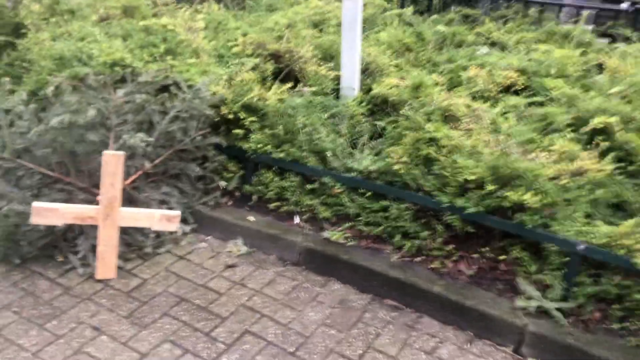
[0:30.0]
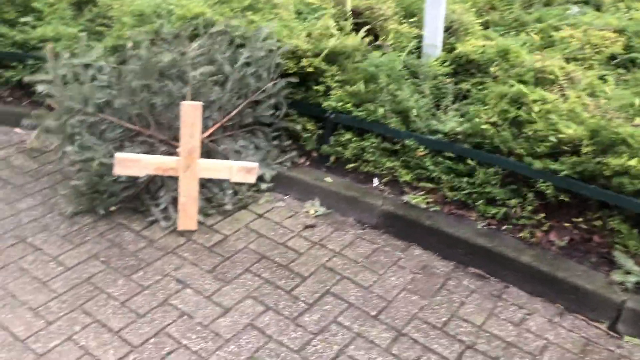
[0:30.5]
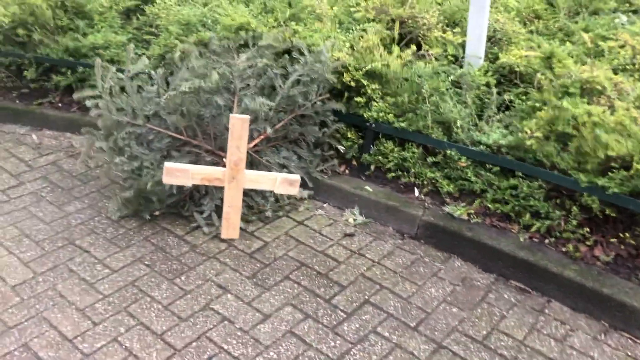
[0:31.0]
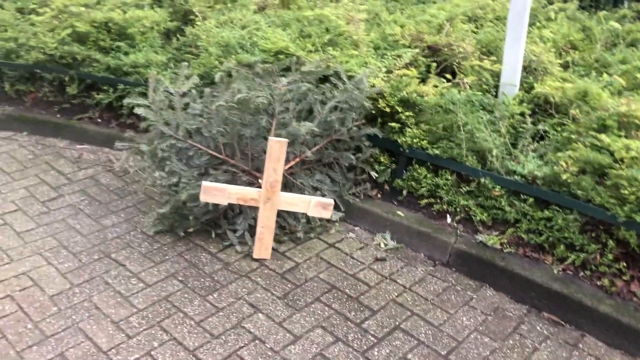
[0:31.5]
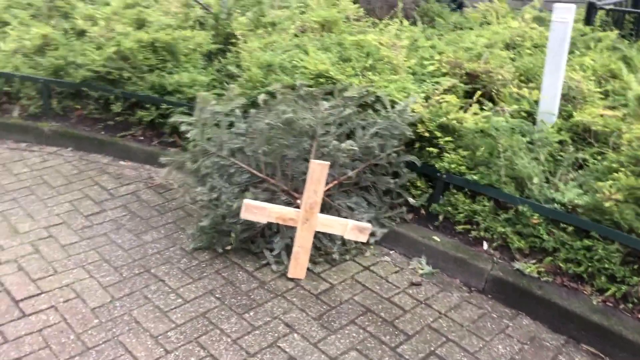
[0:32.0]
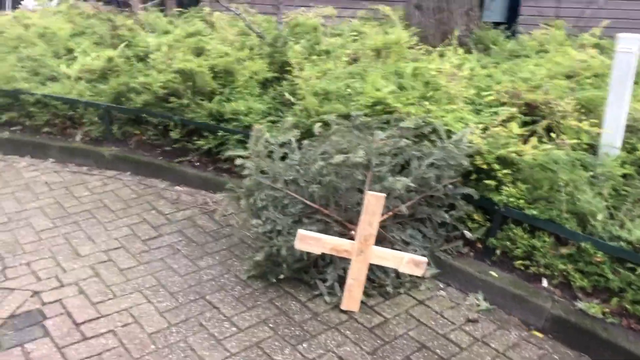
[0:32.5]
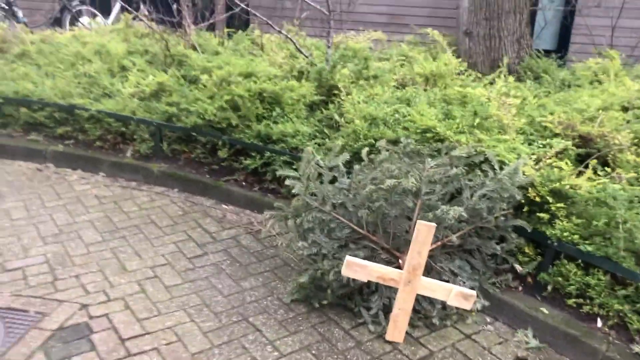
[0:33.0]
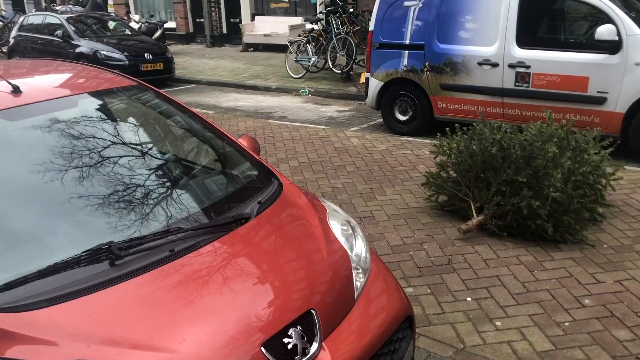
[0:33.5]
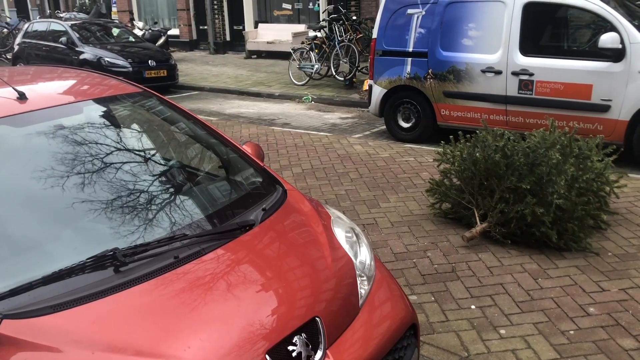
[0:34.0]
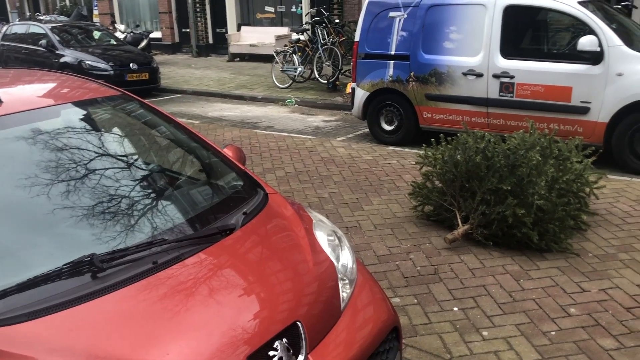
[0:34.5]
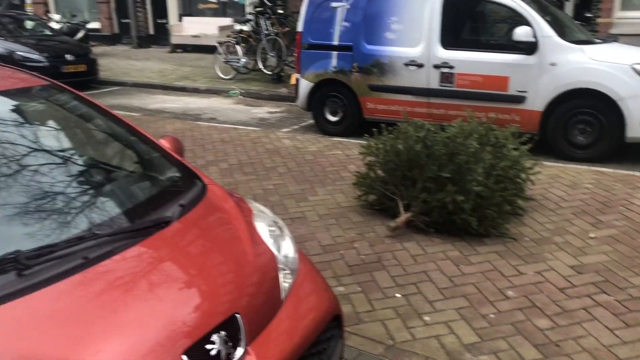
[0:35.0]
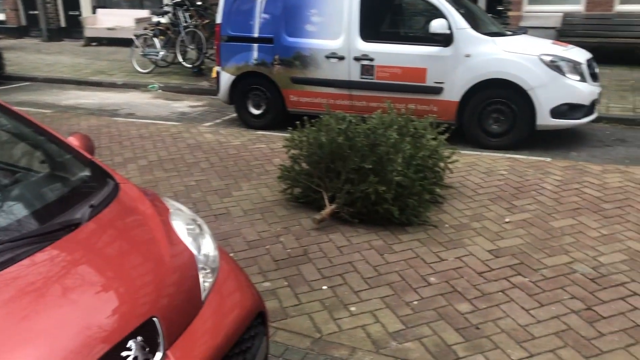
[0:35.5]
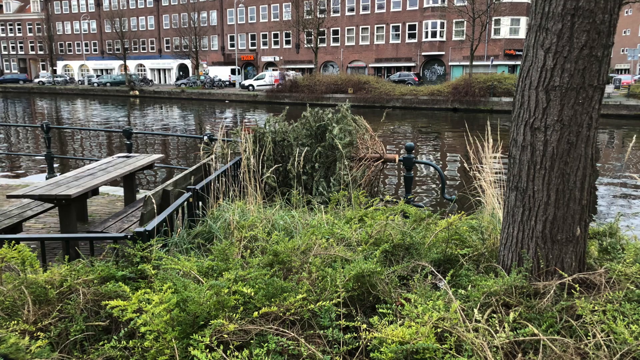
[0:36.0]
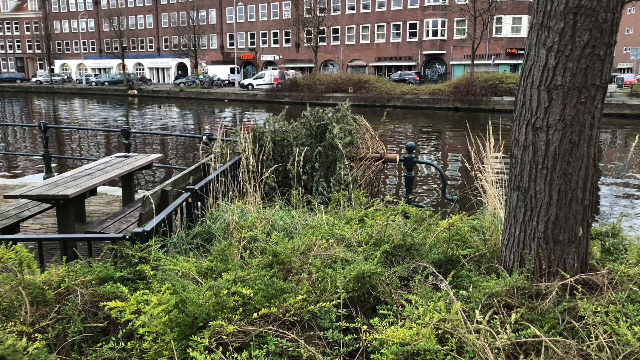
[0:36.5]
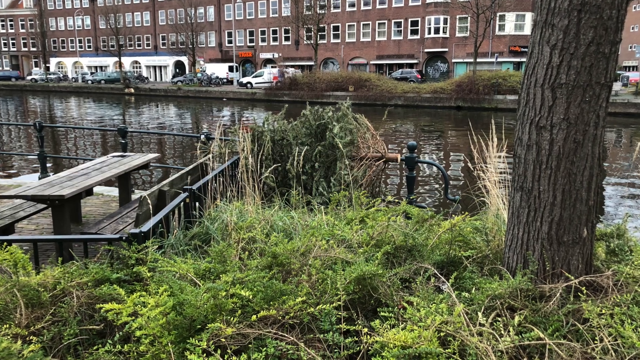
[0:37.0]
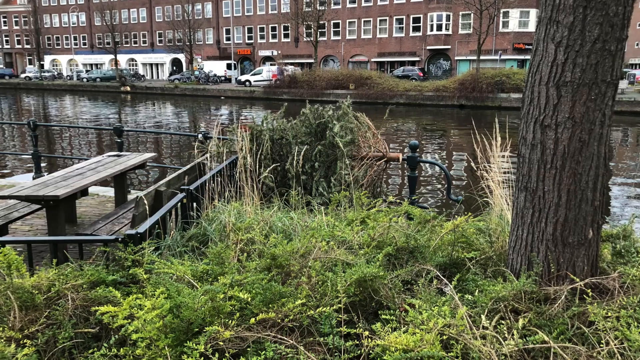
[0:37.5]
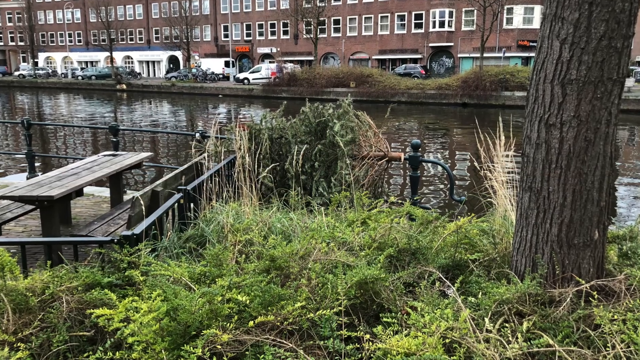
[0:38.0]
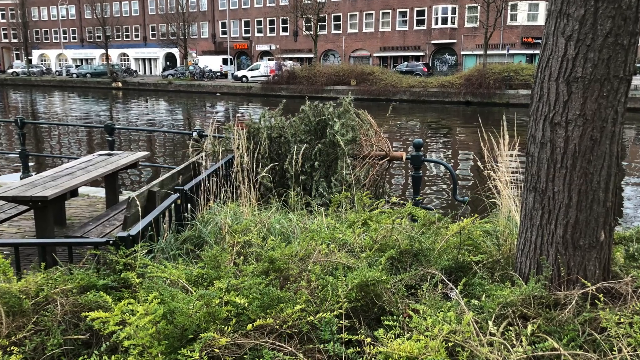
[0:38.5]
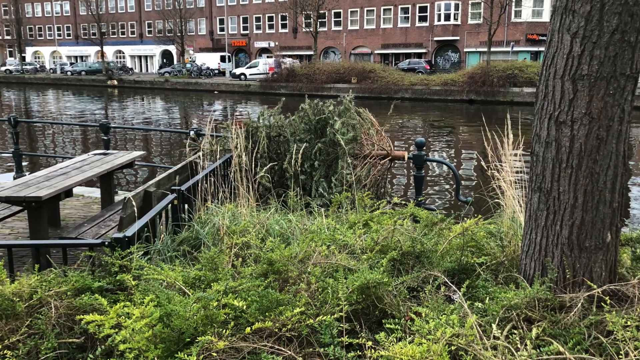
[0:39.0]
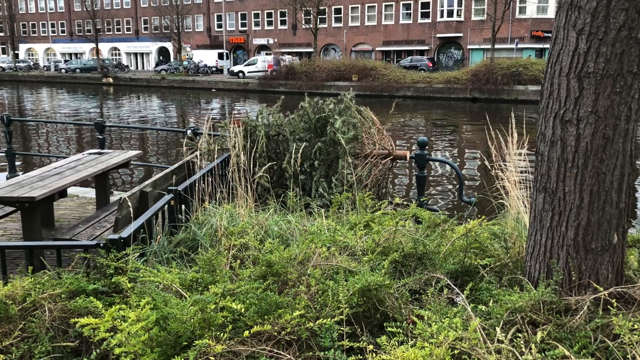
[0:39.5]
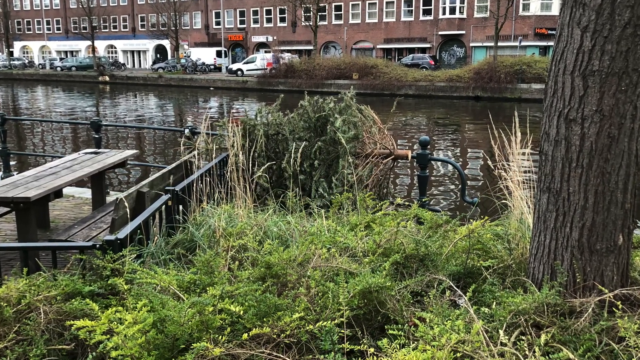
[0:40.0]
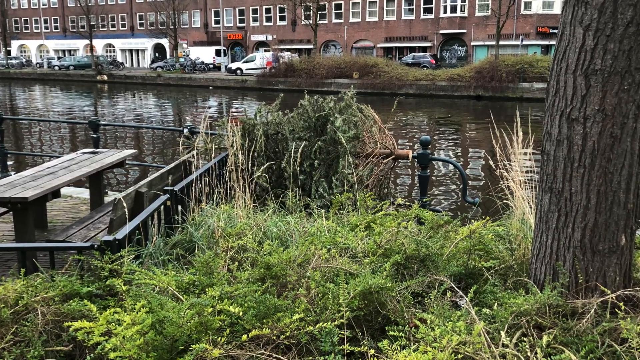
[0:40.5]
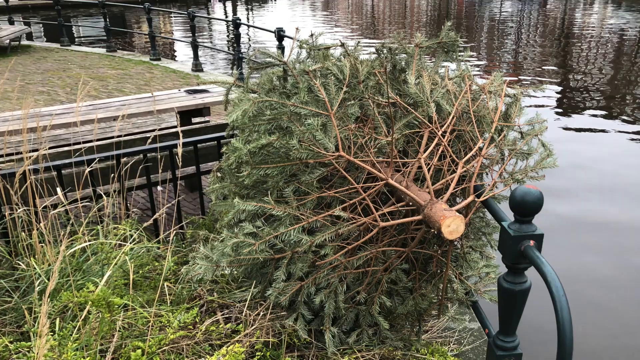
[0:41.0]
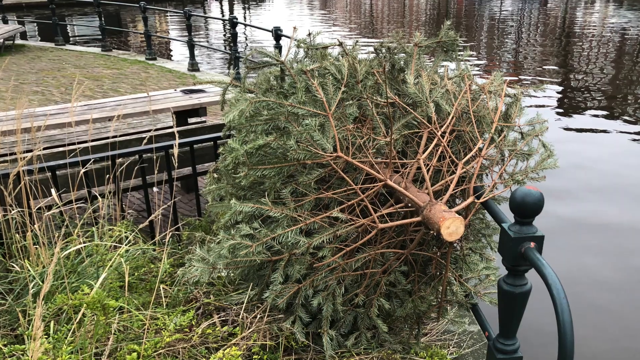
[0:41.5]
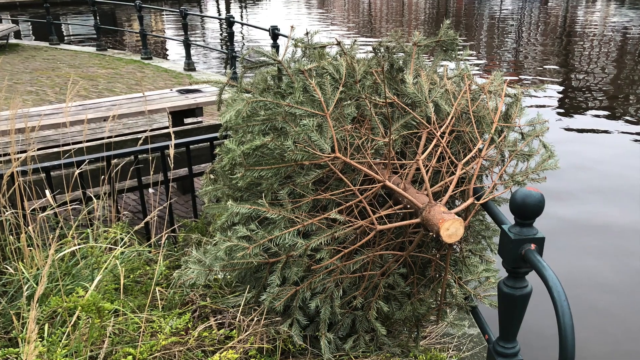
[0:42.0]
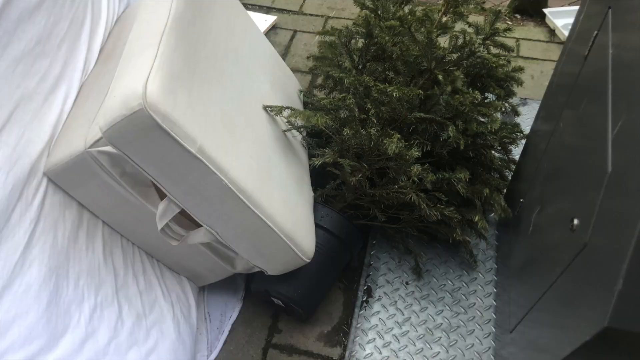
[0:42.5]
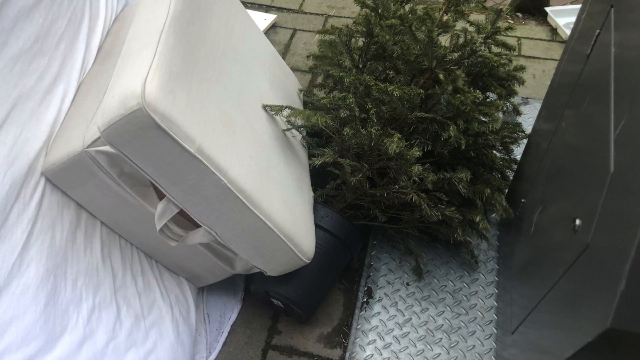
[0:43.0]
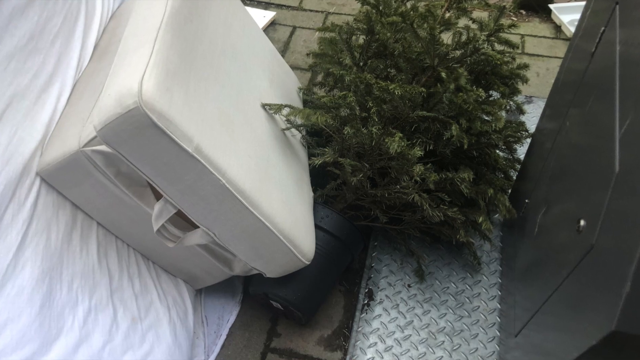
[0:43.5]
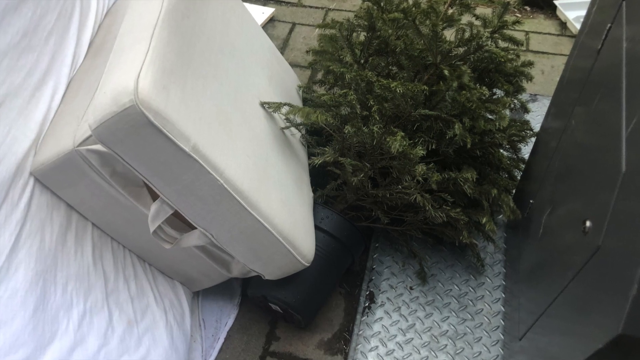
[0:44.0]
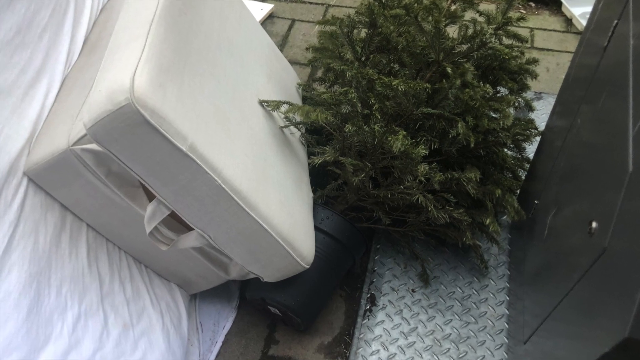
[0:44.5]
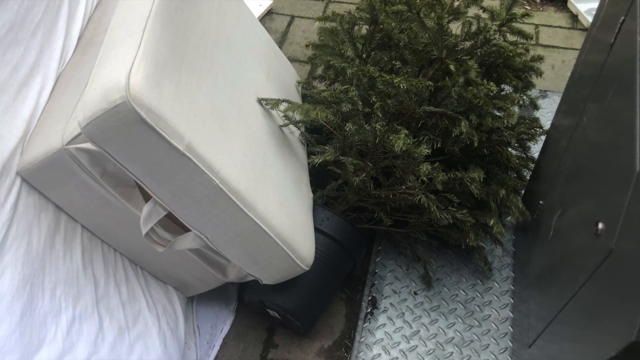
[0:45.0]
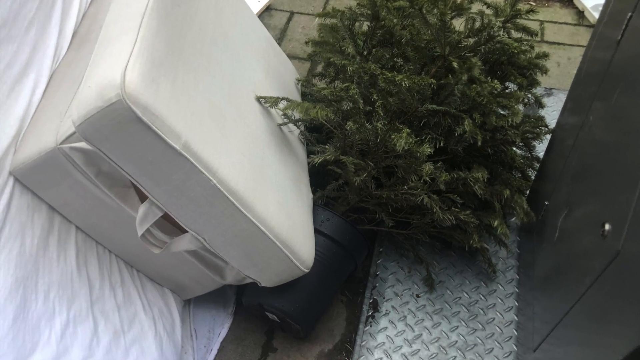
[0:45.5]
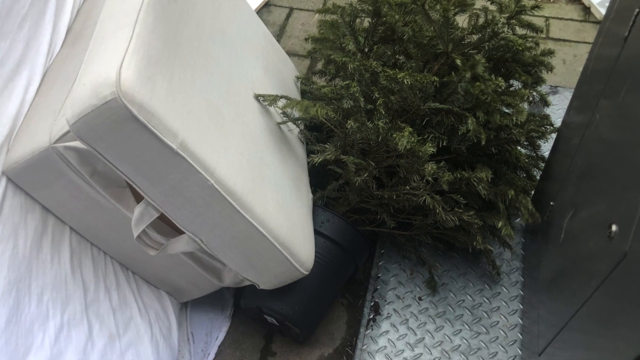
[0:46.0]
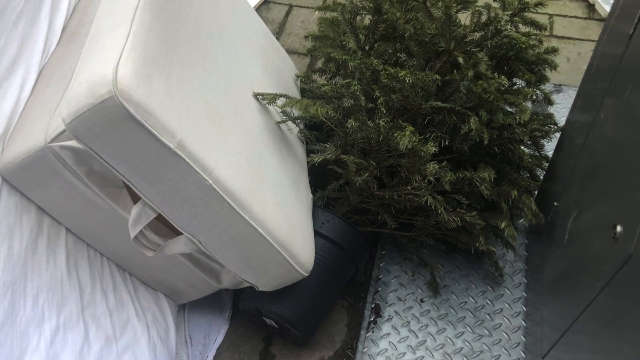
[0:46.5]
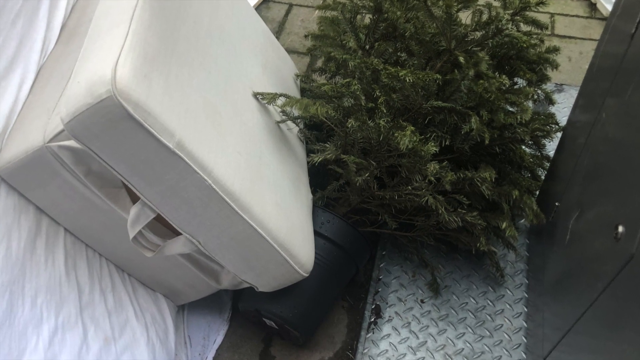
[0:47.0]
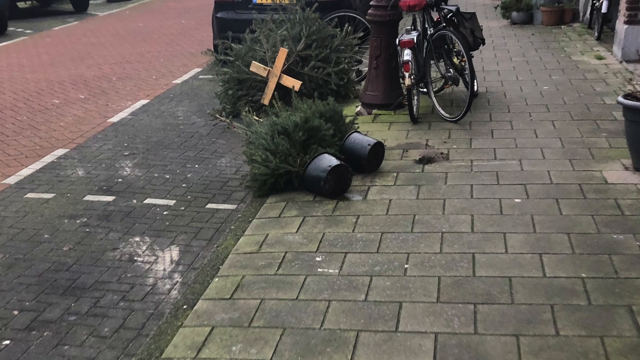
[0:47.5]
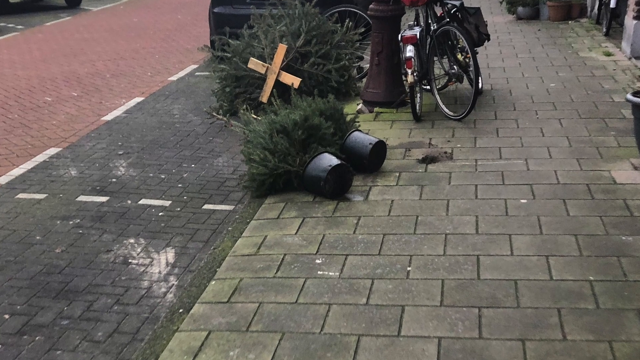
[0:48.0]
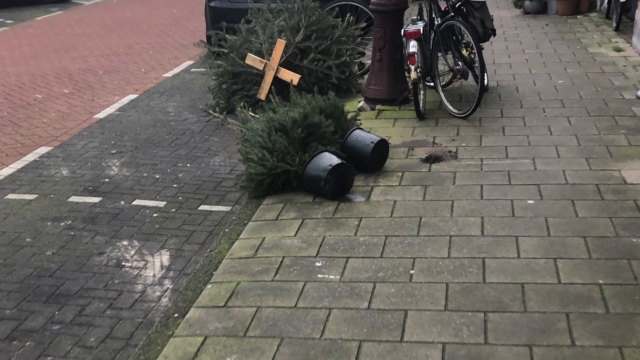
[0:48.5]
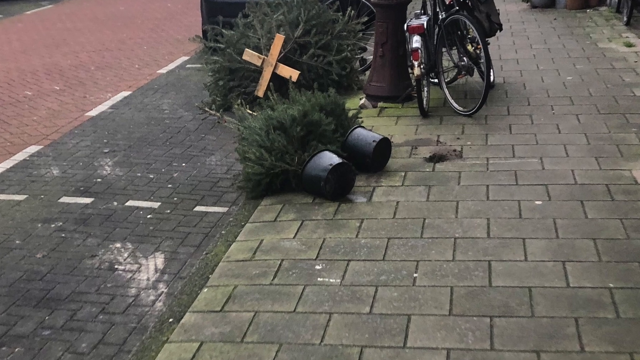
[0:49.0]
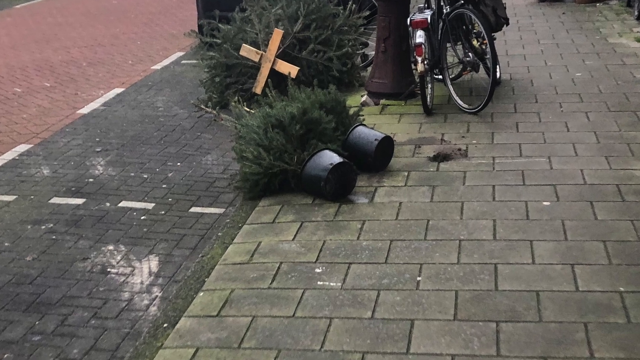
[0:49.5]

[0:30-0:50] The video concerns the United States of Europe. A water well stands in the middle of a city, with a bench and vegetation nearby, and everything looks bright. Someone has been pruning the trees. It seems somewhat windy, with trees being blown, possibly after some kind of storm. There is a bicycle, and a tree has almost fallen on top of it. There is no snow. Vehicles are parked by the roadside, mostly Citroen cars, suggesting the location may be France, Germany or Belgium.